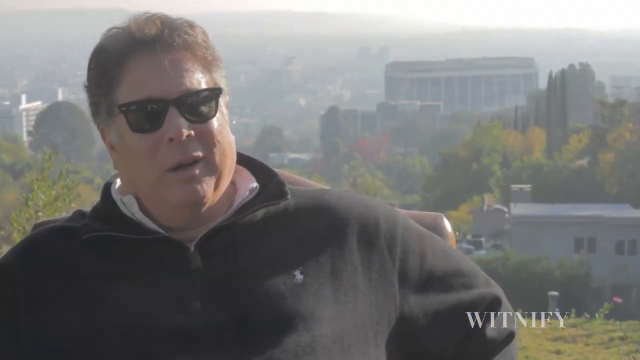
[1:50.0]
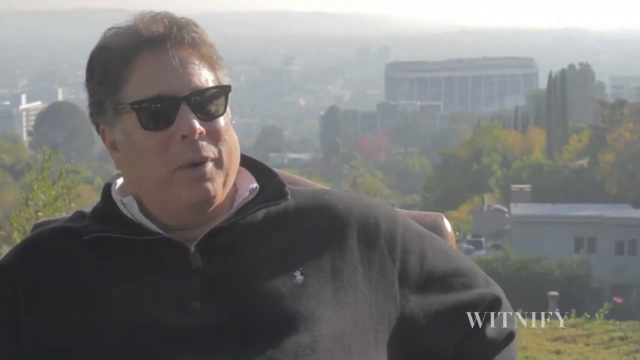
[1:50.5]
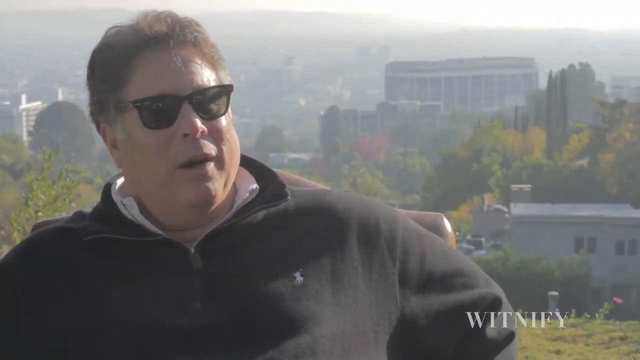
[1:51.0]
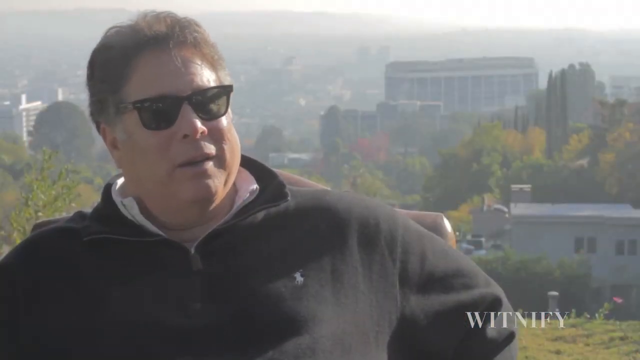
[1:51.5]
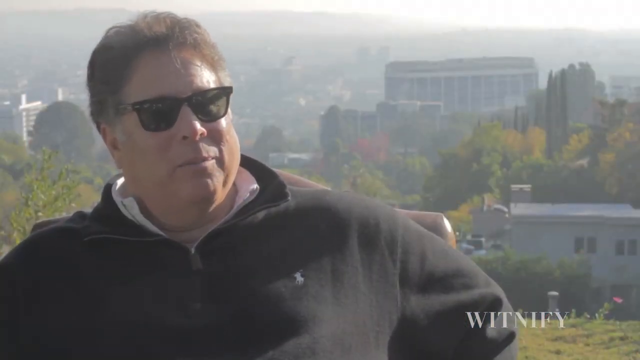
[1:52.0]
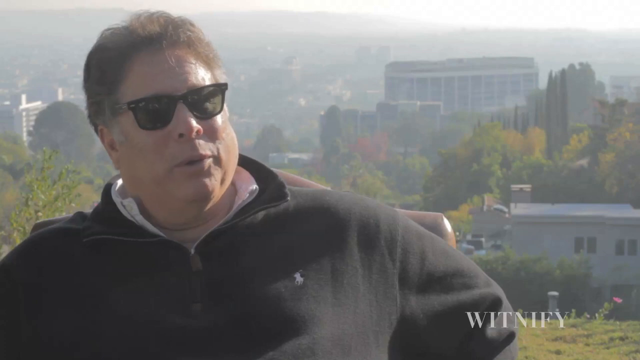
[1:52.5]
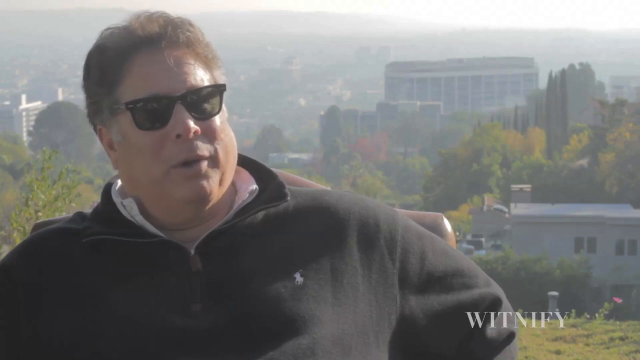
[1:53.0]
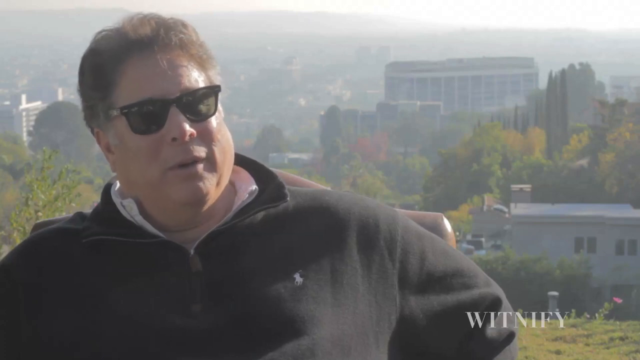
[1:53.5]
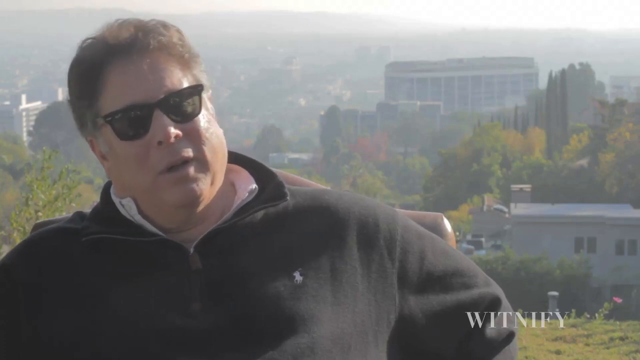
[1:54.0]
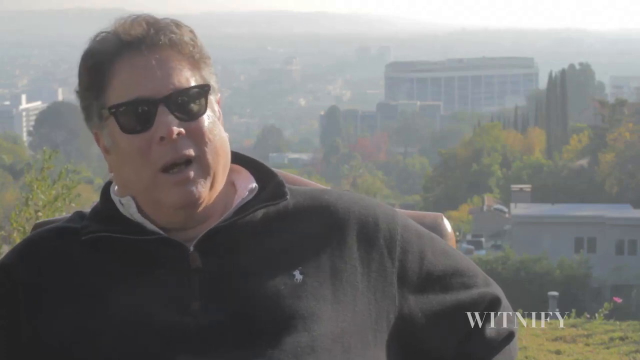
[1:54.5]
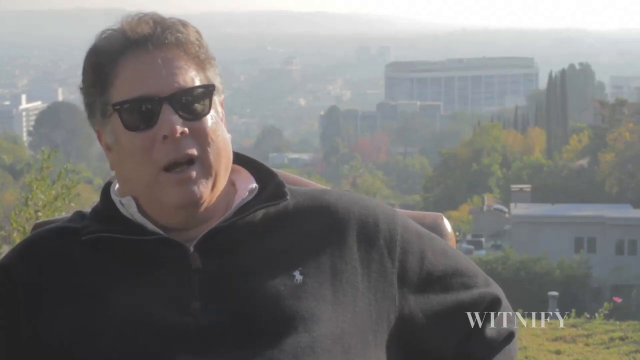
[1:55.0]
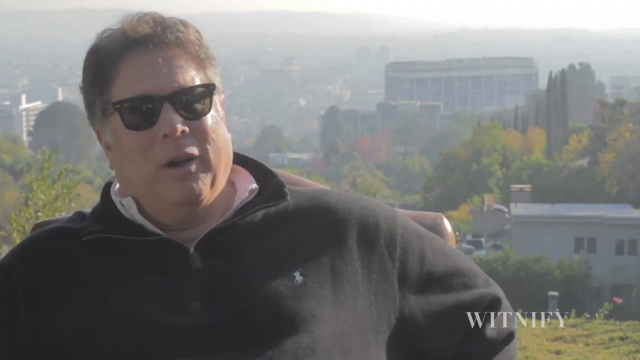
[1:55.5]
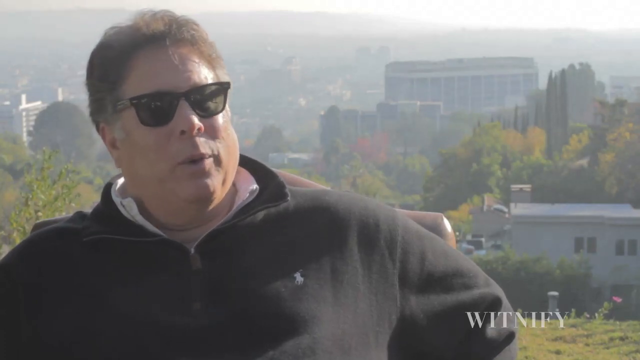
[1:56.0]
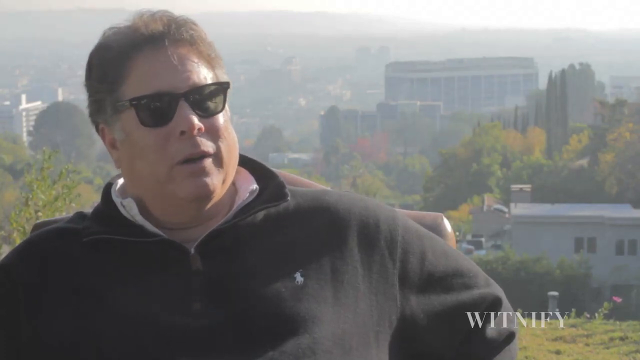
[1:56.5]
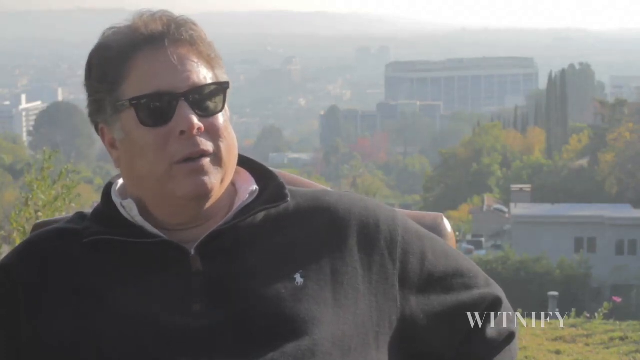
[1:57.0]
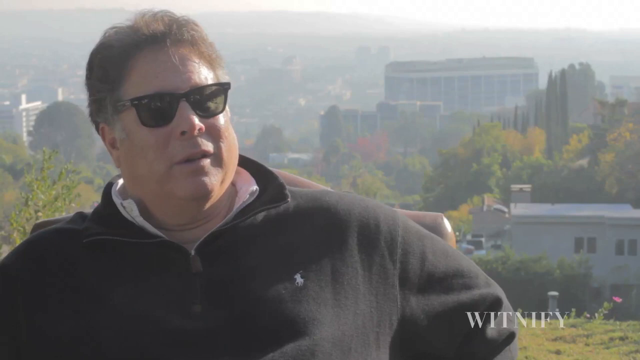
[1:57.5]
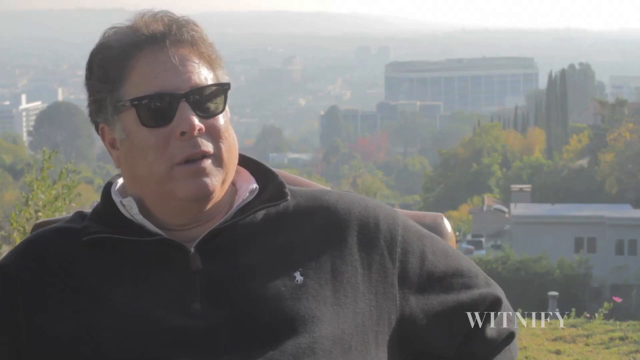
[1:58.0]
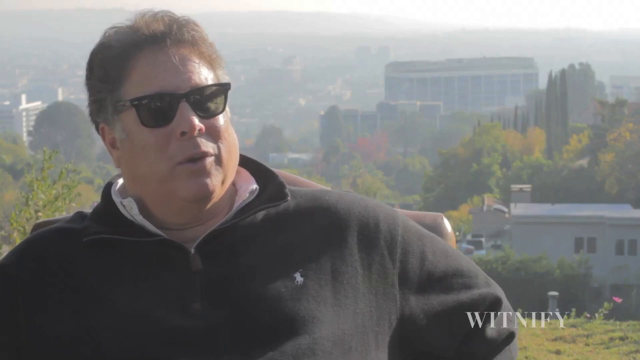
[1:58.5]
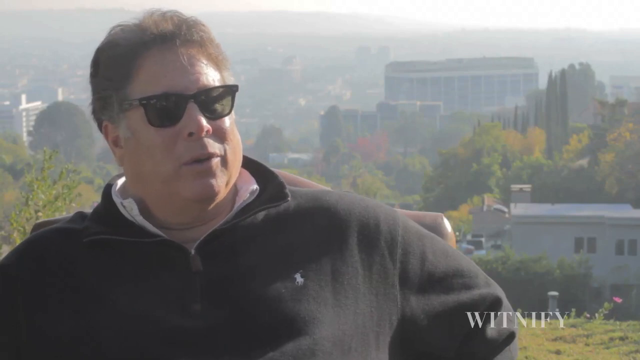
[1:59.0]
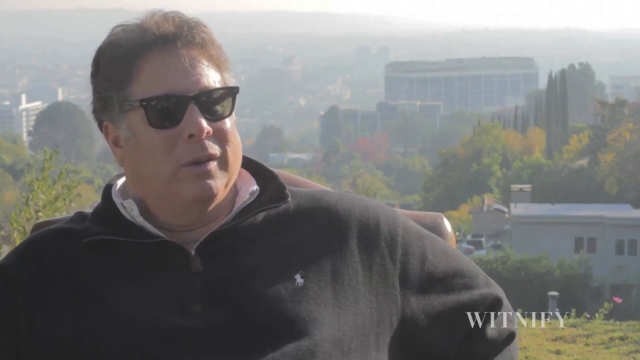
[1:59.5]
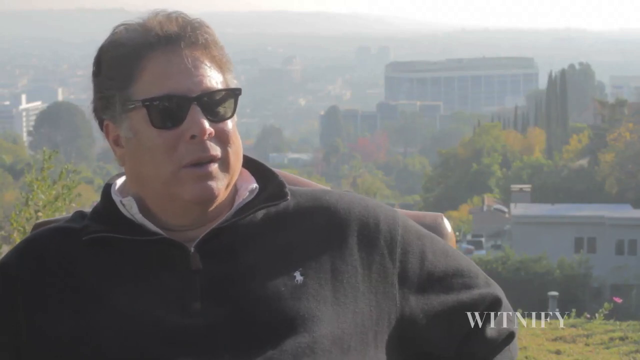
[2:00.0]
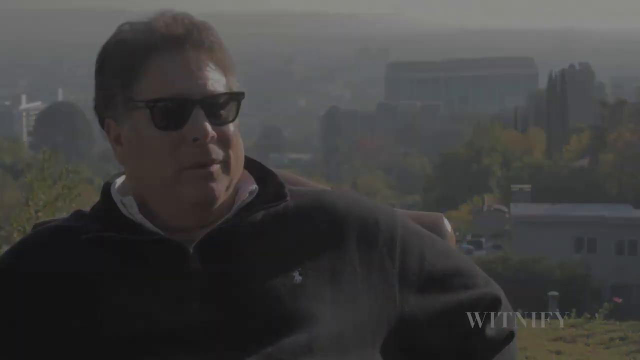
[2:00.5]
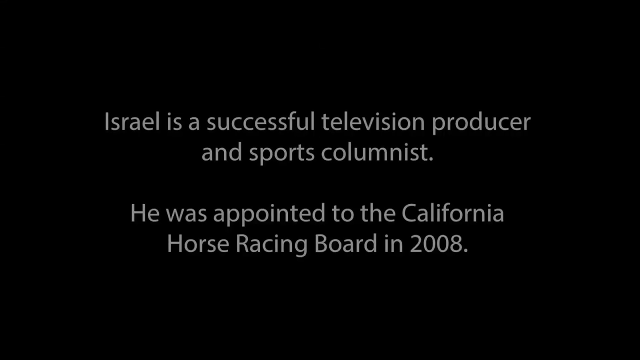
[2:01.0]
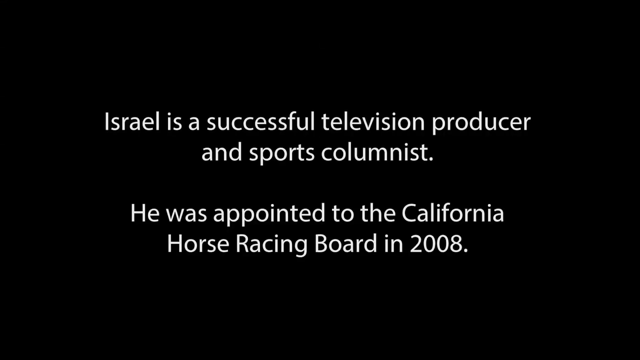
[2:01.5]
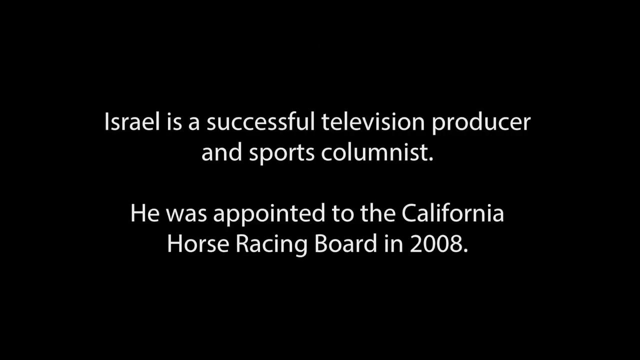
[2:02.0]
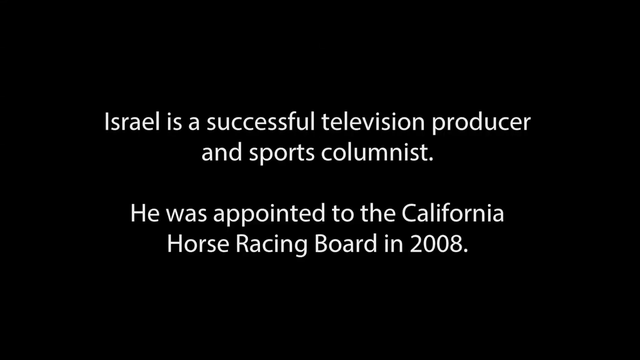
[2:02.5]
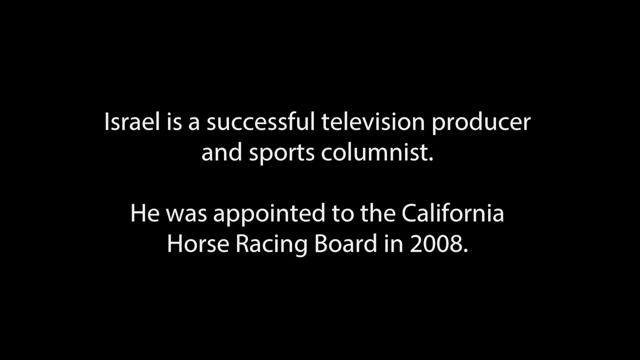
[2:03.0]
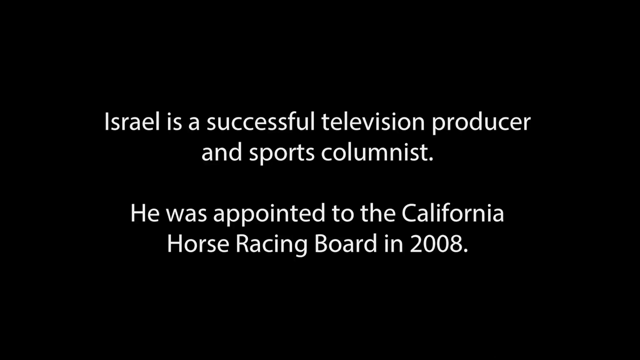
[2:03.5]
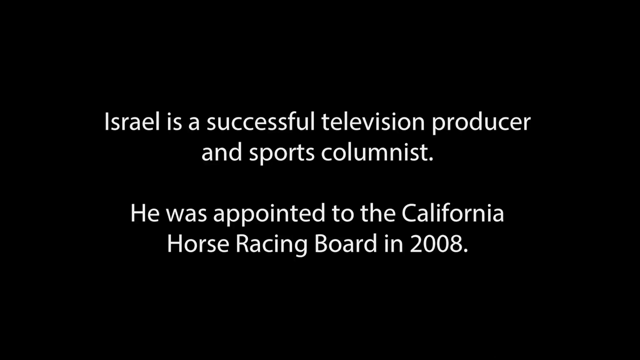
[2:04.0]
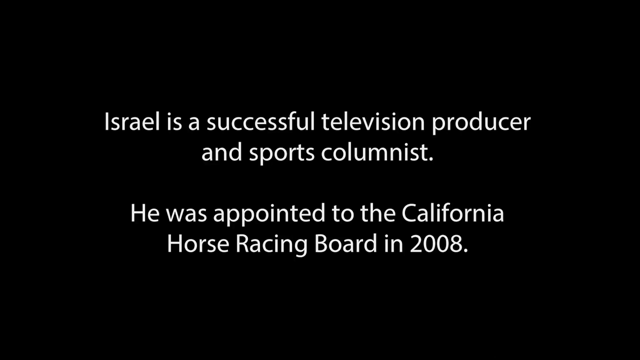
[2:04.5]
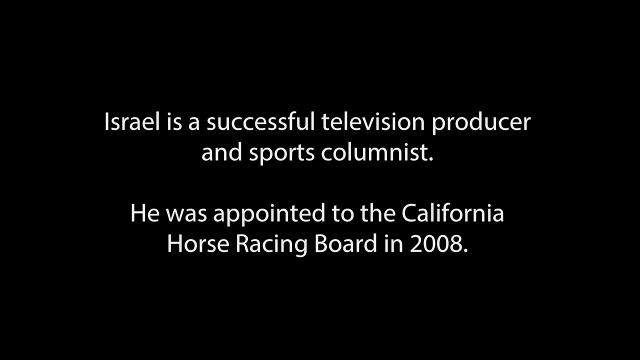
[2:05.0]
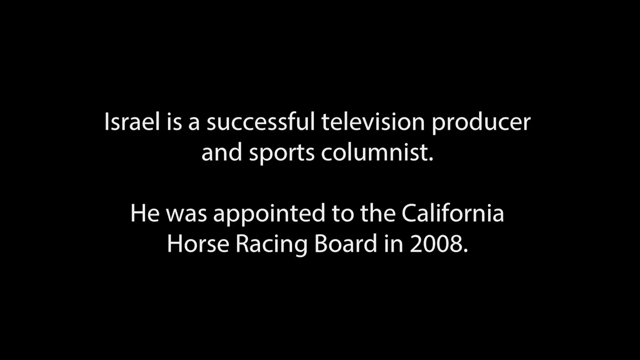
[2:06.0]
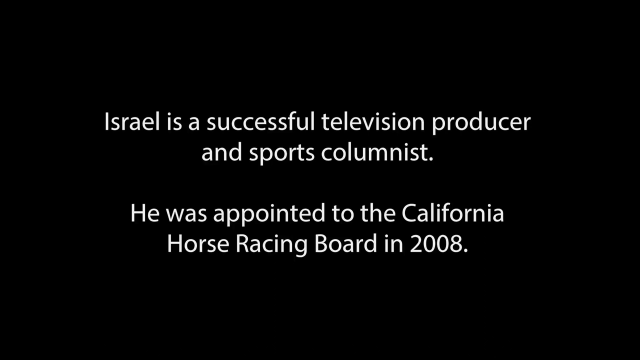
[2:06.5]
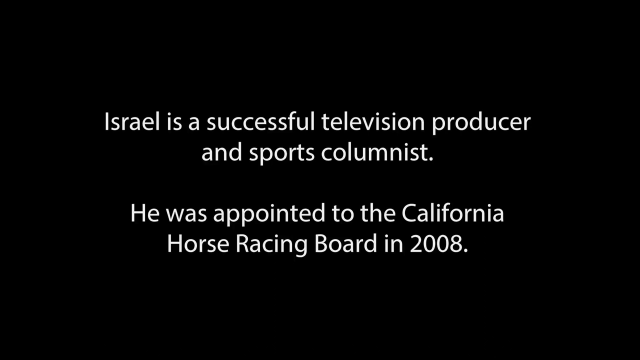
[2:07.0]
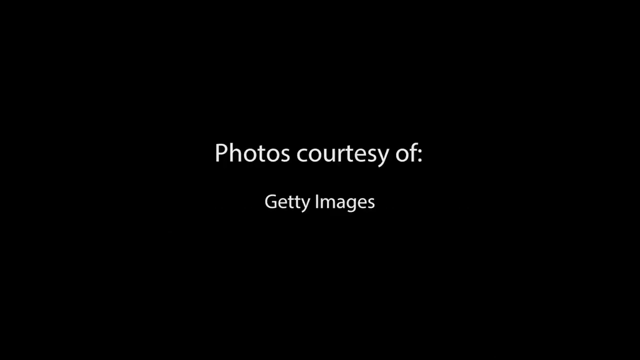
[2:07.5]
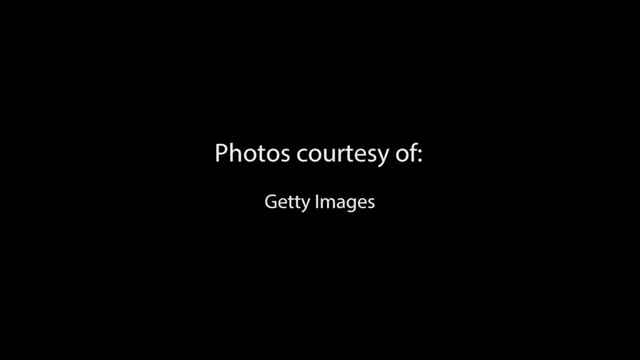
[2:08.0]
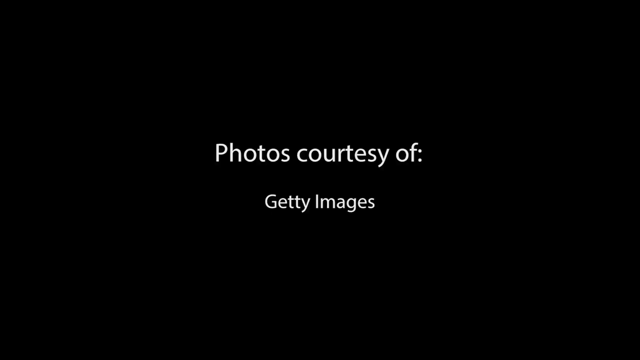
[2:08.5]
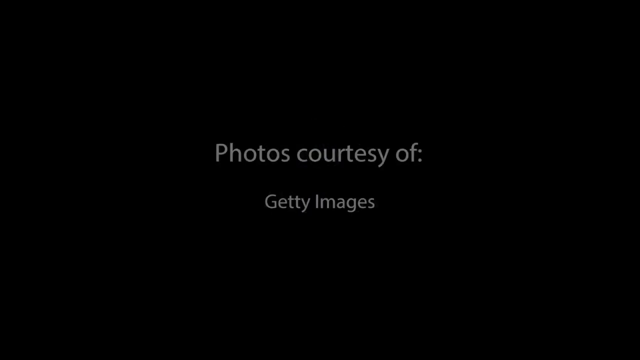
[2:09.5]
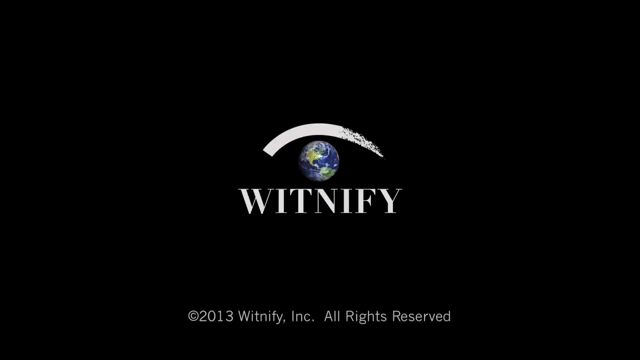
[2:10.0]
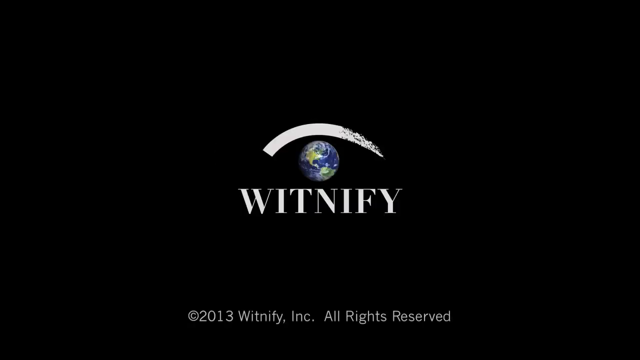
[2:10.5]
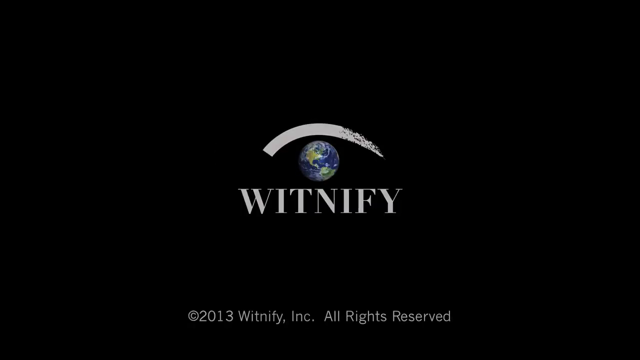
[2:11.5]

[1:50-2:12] David Israel, in black sunglasses and a black fleece sweater or jacket, speaks into the camera. He makes a few gestures and nods his head slightly to his right as he keeps looking into the camera and speaking. There is a slight pause at one moment, and then he stops talking. A caption in white on a solid black background follows: "Israel is a successful television producer and sports columnist. He was appointed to the California Horse Racing Board in 2008." It stays on screen for quite some time. Another caption then reads "photos courtesy of Getty Images". Finally, a graphic shows the planet Earth with a white curved line above it and the word "witnify" in white below it, and the video ends after the graphic disappears.